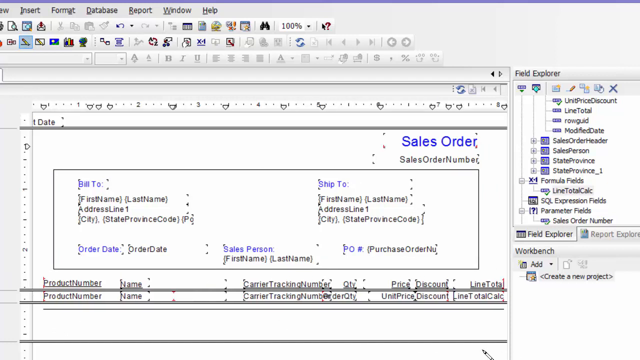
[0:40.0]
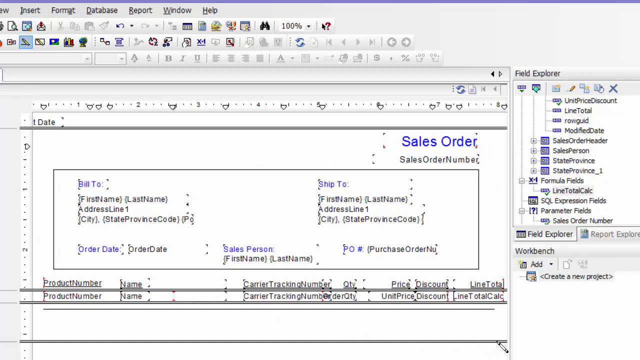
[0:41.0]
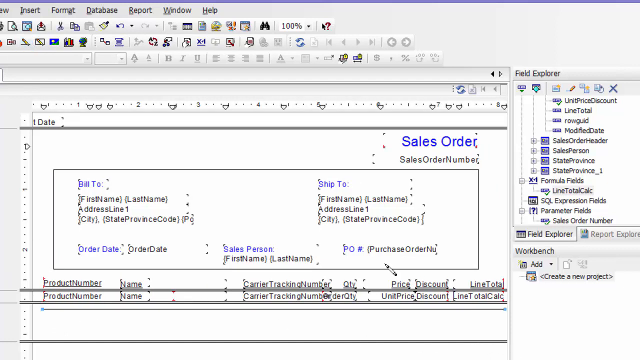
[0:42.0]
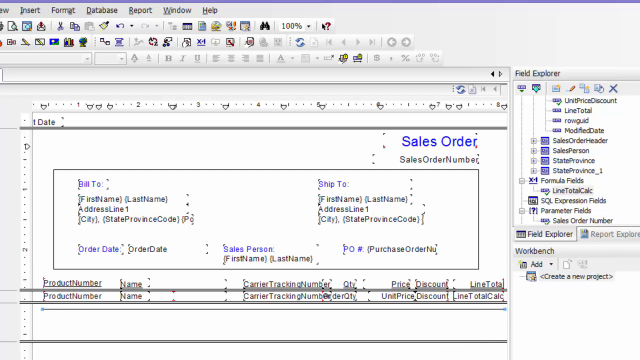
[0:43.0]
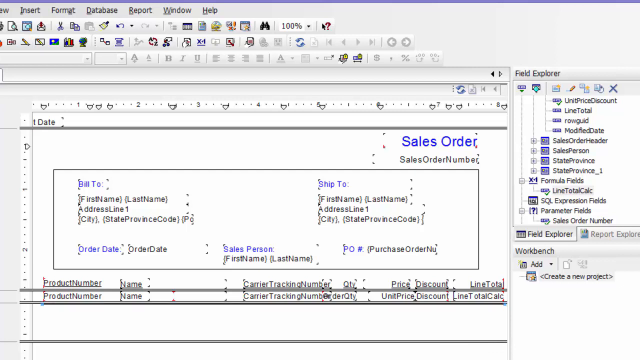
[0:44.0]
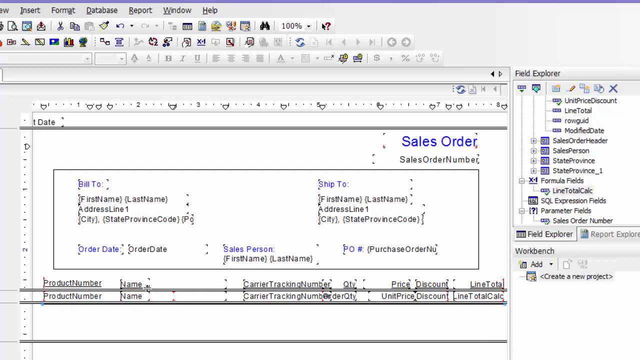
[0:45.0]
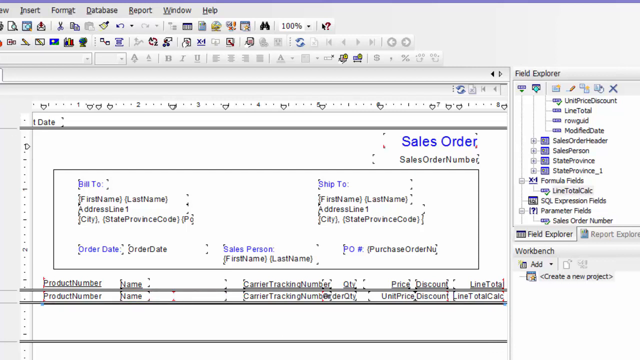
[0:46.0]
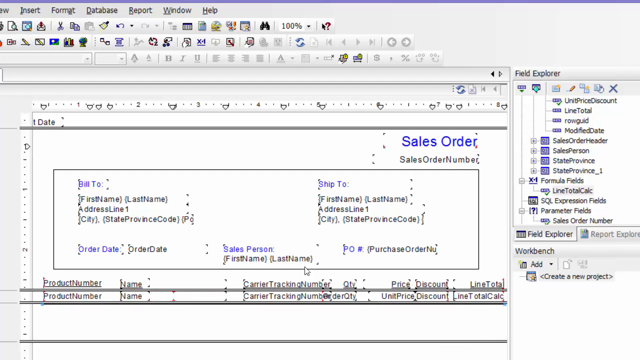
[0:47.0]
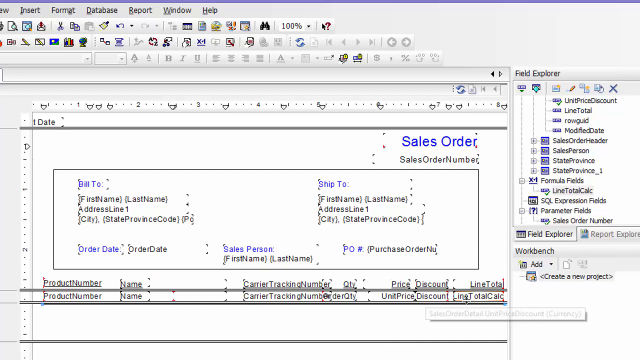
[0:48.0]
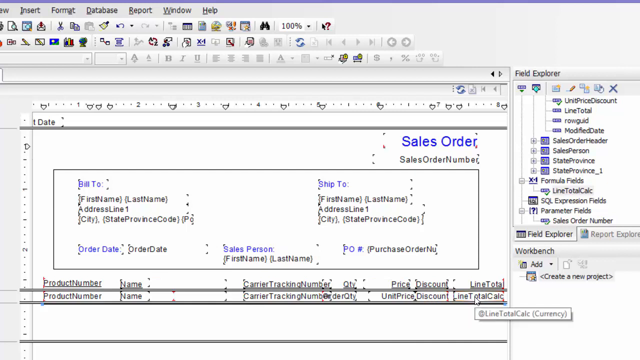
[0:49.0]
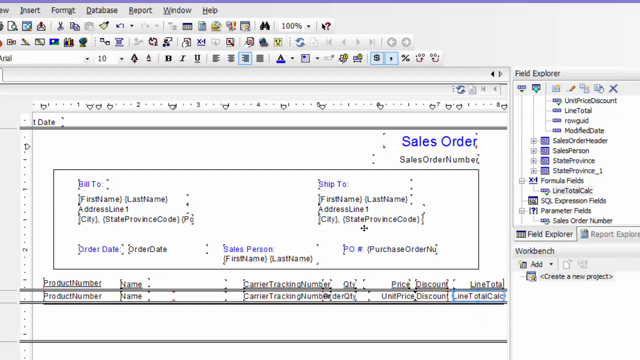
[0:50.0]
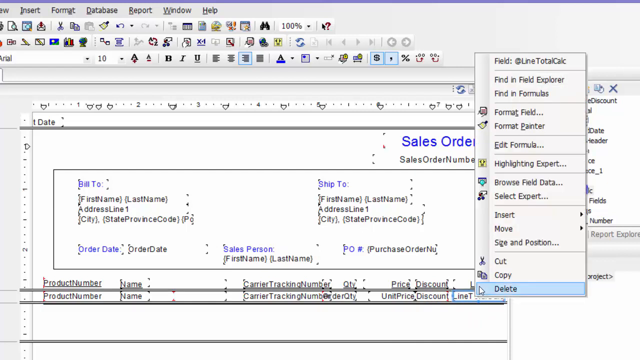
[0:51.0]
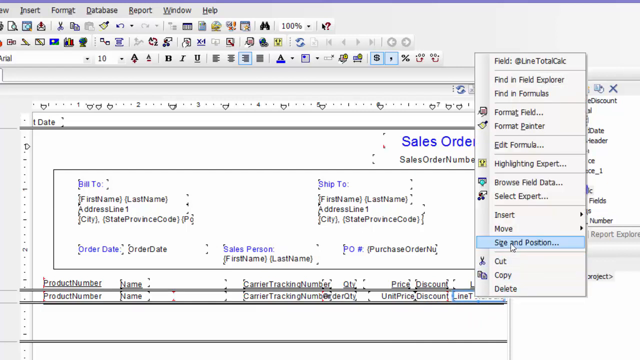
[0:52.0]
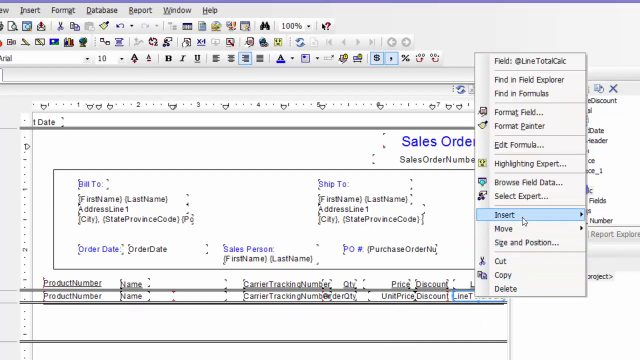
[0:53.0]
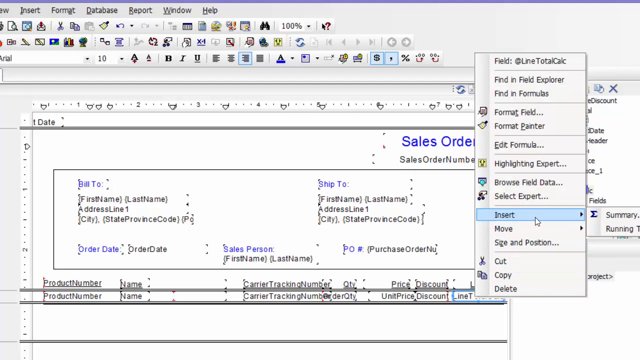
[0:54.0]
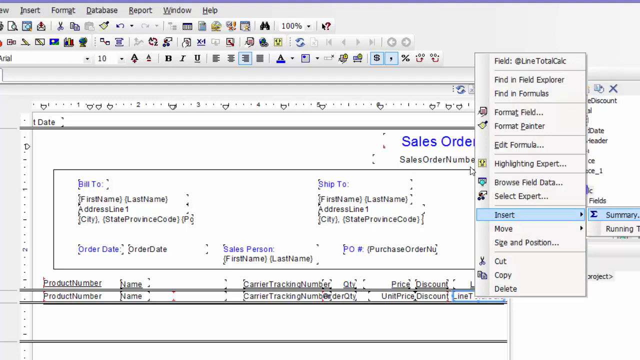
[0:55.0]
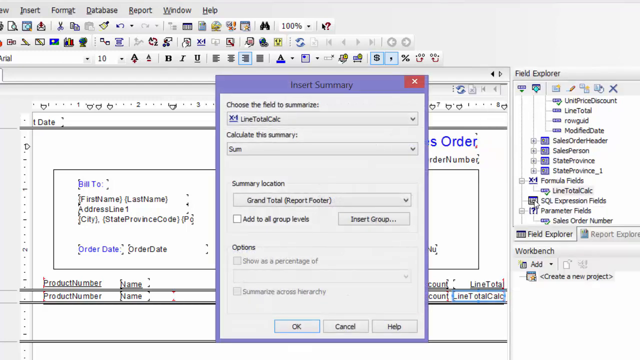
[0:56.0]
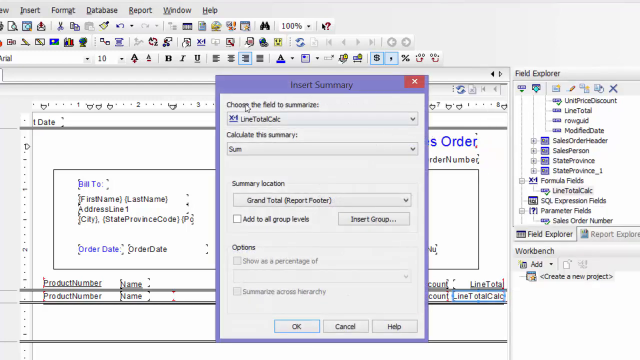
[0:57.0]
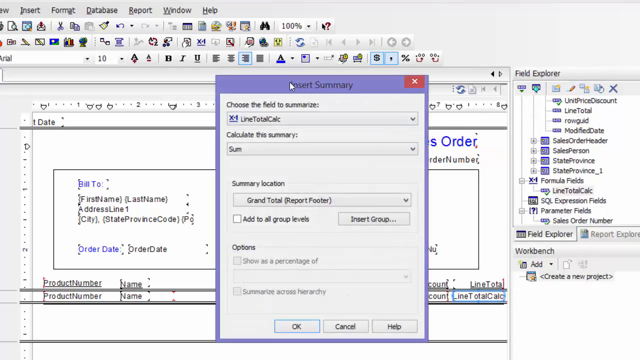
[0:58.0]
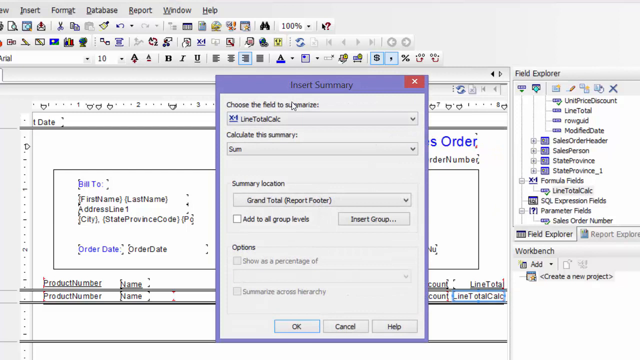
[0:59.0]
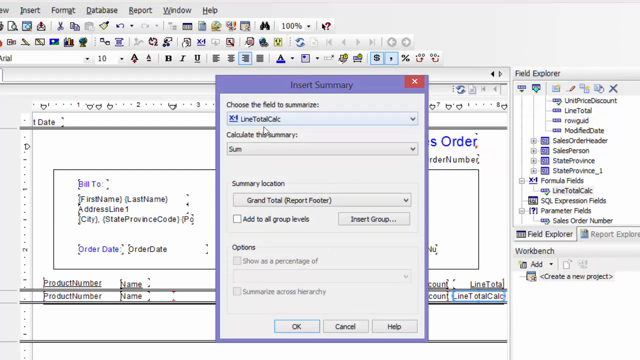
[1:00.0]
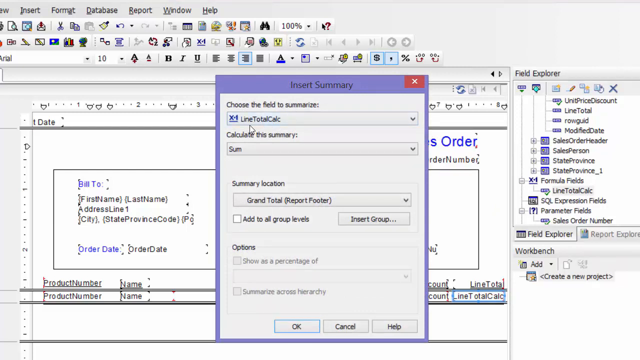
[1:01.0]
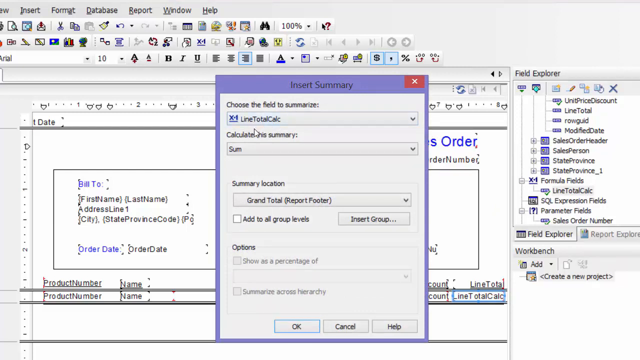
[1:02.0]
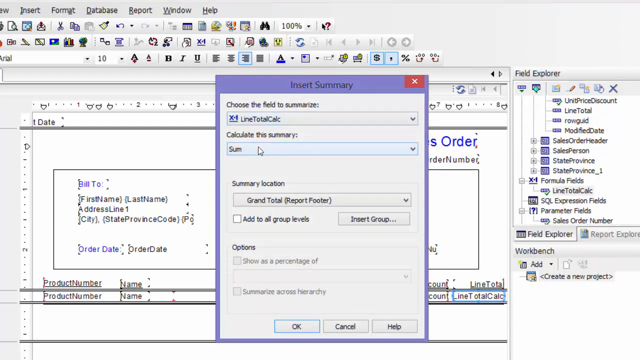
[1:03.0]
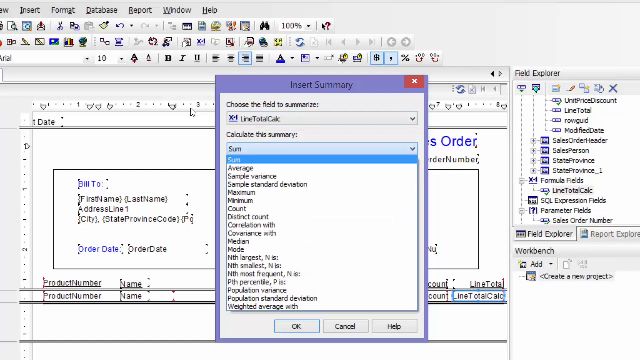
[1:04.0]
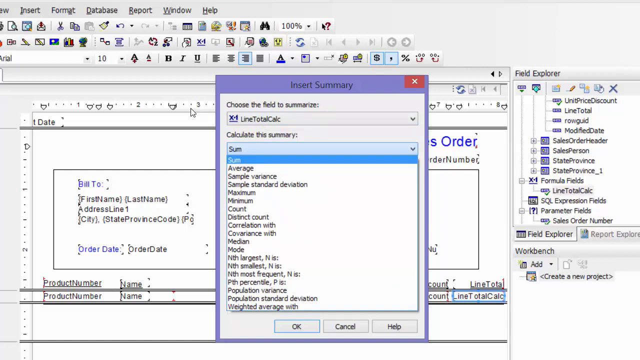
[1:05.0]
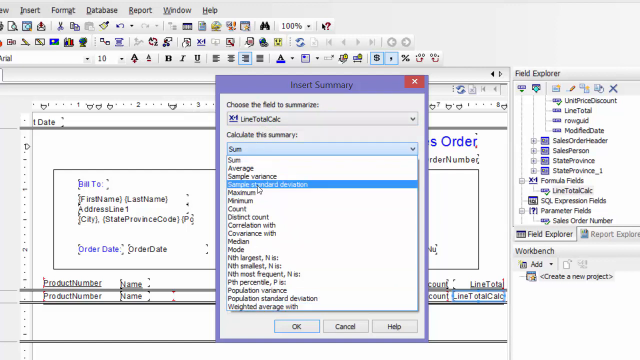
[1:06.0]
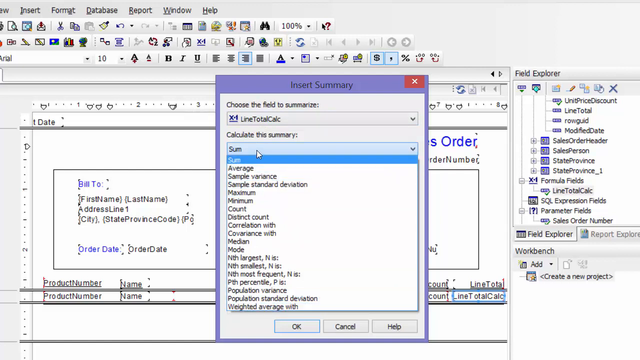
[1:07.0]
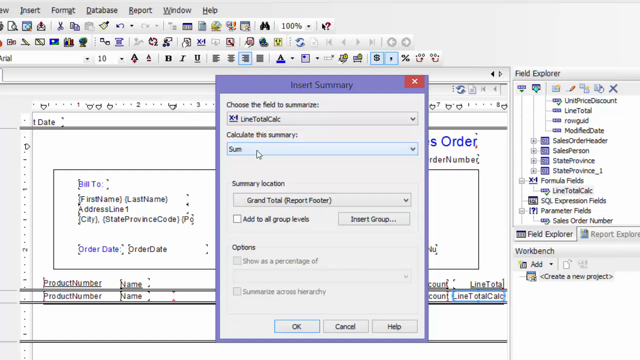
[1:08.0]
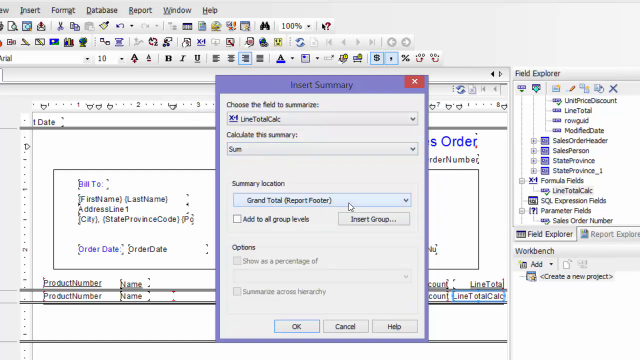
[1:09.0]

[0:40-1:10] At the box with the bill to and ship to, the user right-clicks a line to the right of the unit price discount, the second entry right underneath the bill to box. They move the mouse pointer around, seemingly figuring out what they want, then hover over insert, and an arrow brings out two more entries in the list. They click summary, and an insert summary box appears at the top with a lavender border. "Line total calc" is in the drop-down. The cursor hovers for a moment without pressing anything, moving under each part almost as if reading it. They click the drop-down for the sum, which has a number of entries including average, sample variance, maximum and minimum. They click back off of it, apparently deciding not to use it. They go down to "grand total", which is also a drop-down box, but do not press it. On the page, the form lines such as bill to, first name and last name have little black arrows at each corner. Along the ruler are many arrows pointing down: probably about 15 on the top, and a little less than half that on the left side. There is also an arrow pointing to the right.